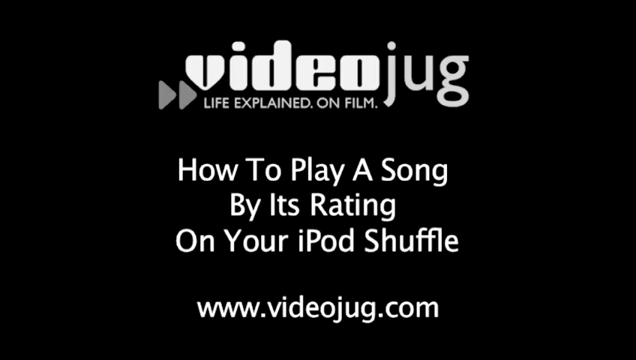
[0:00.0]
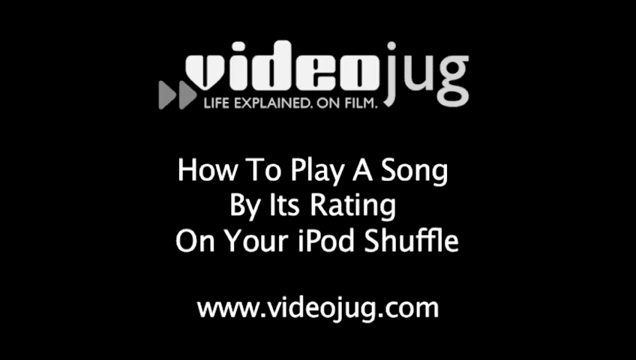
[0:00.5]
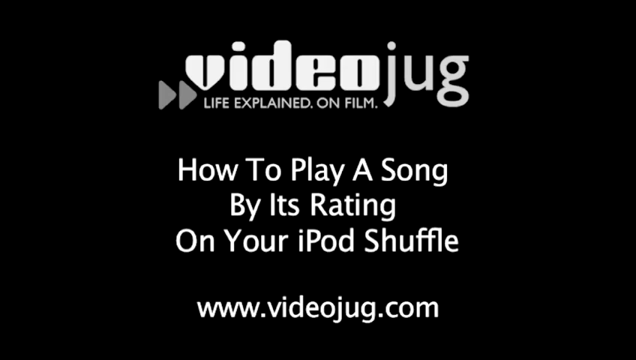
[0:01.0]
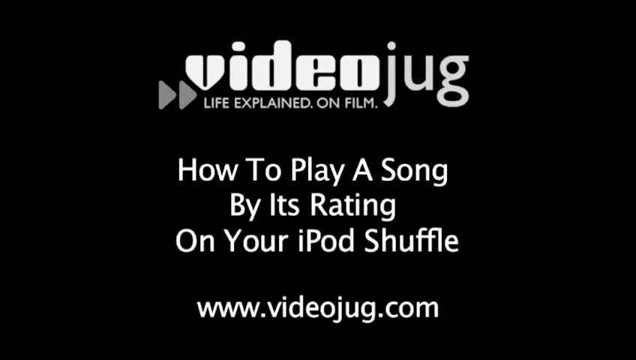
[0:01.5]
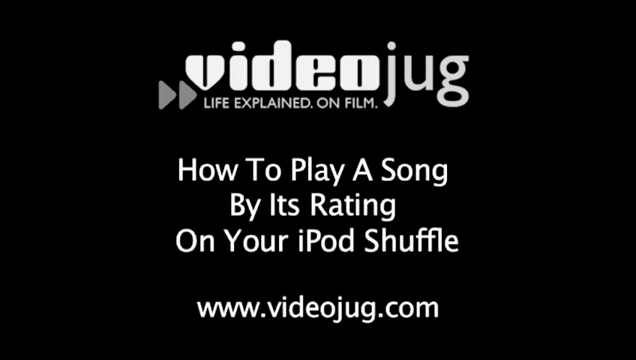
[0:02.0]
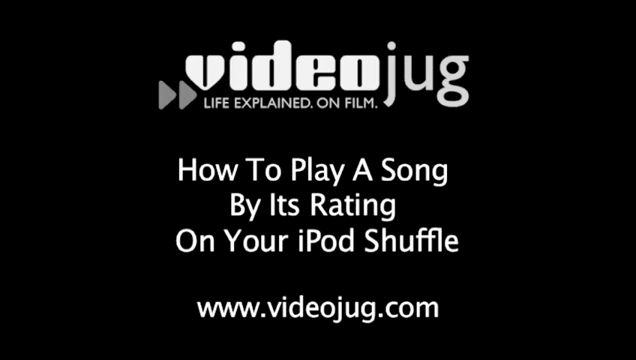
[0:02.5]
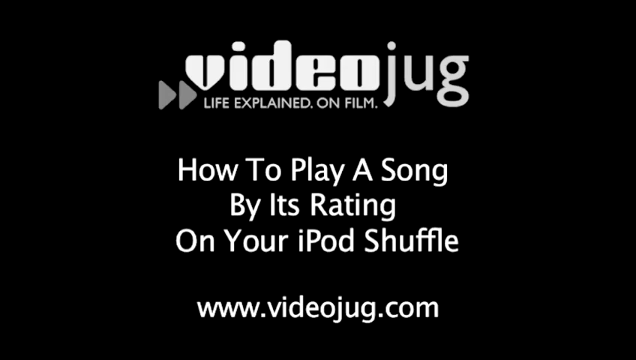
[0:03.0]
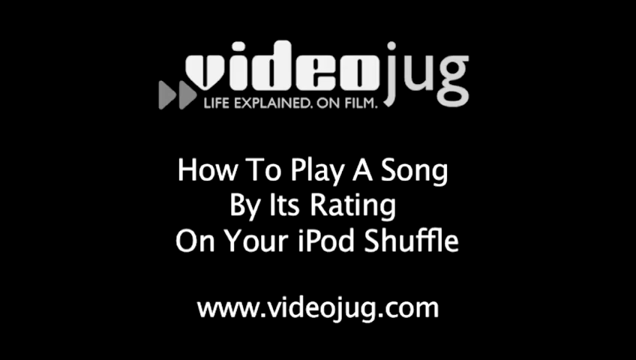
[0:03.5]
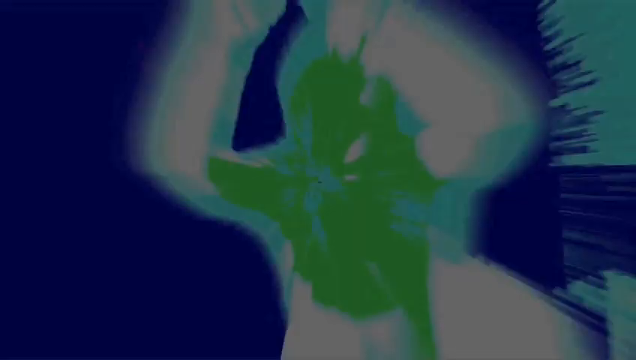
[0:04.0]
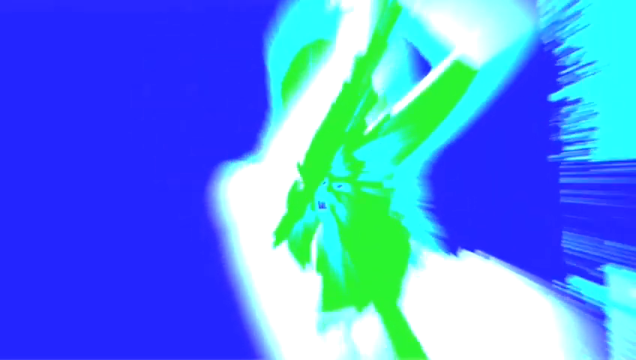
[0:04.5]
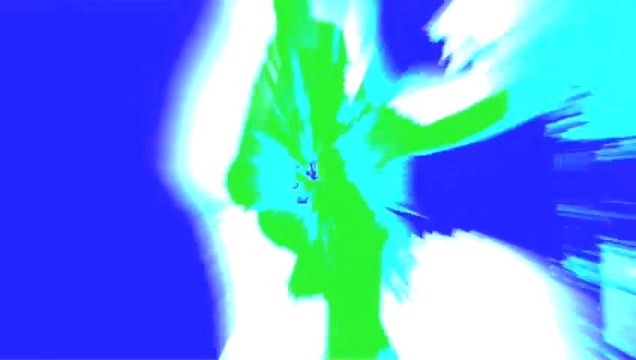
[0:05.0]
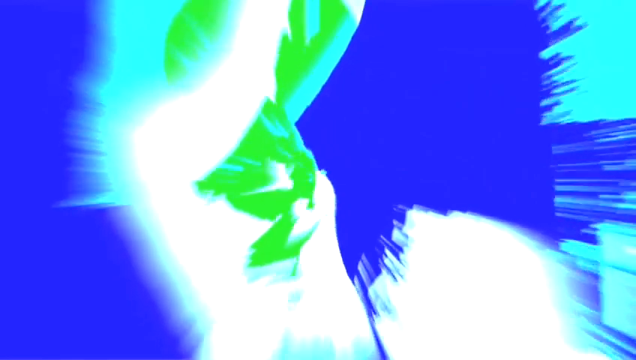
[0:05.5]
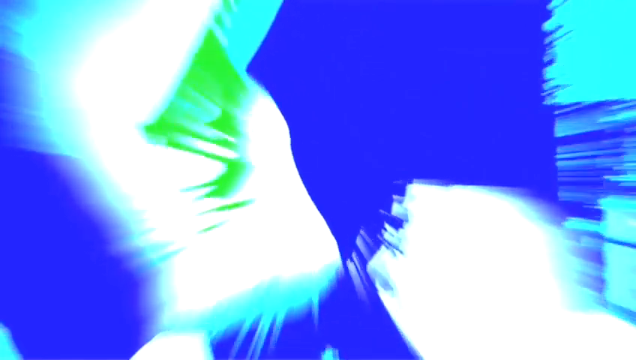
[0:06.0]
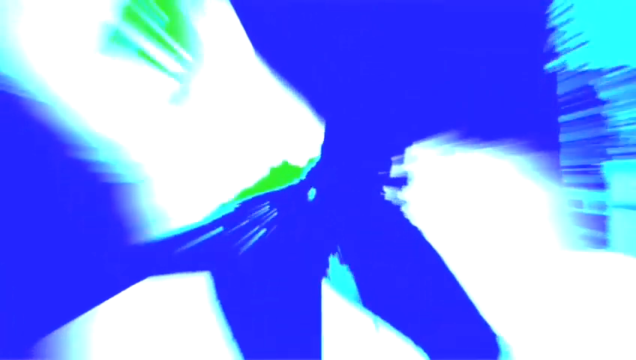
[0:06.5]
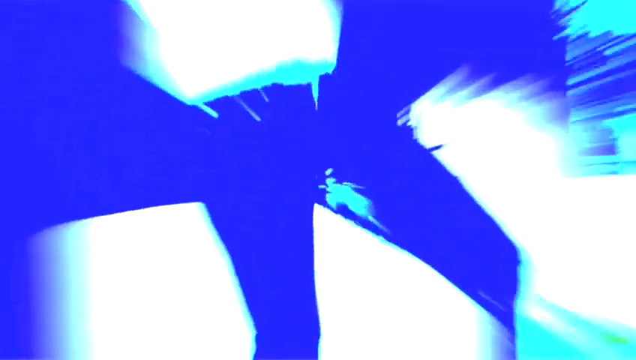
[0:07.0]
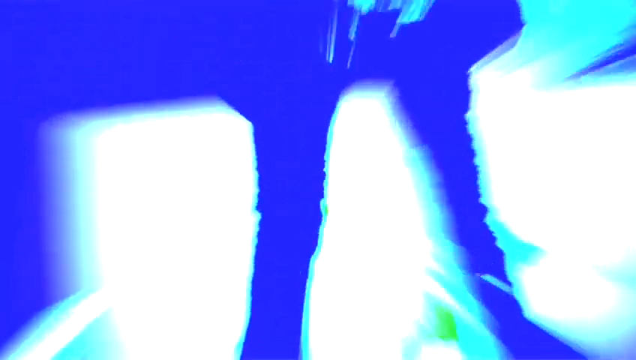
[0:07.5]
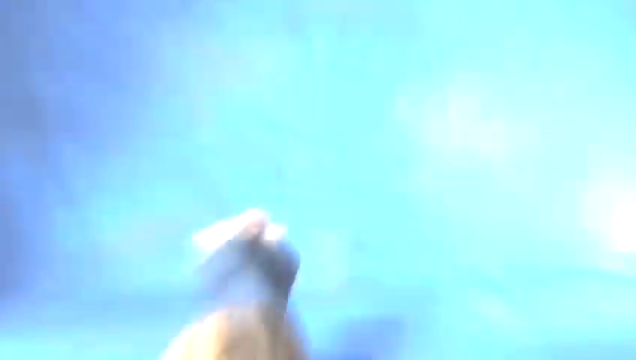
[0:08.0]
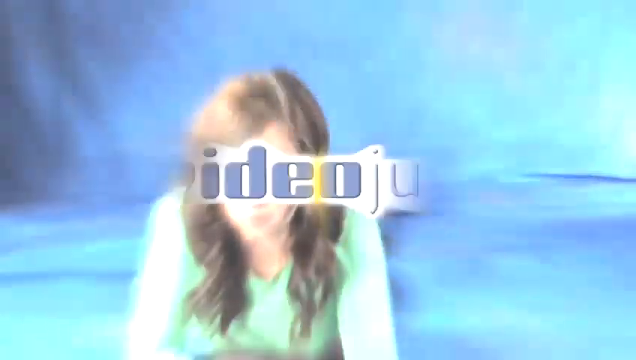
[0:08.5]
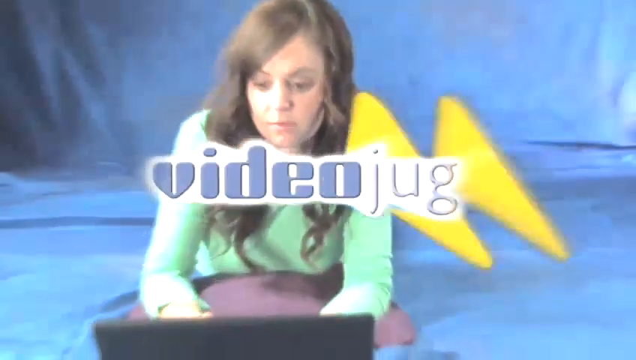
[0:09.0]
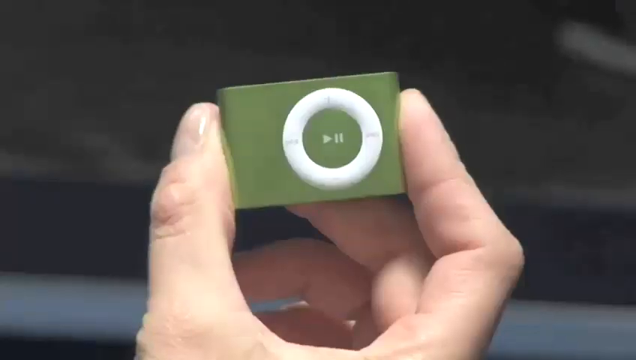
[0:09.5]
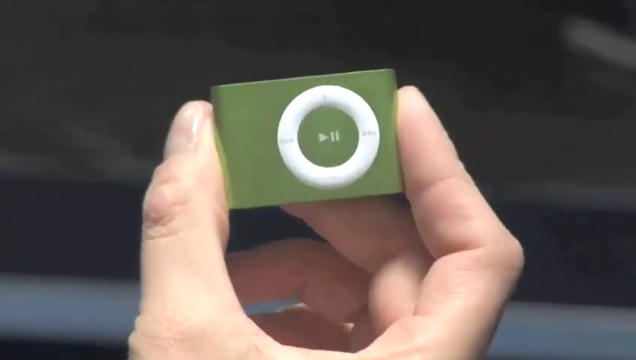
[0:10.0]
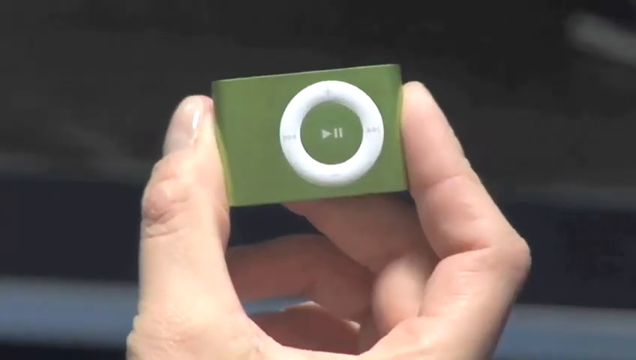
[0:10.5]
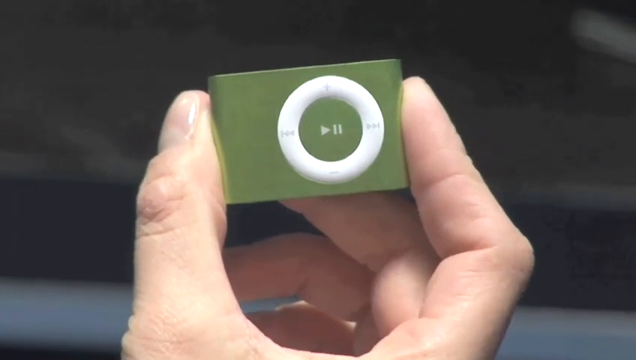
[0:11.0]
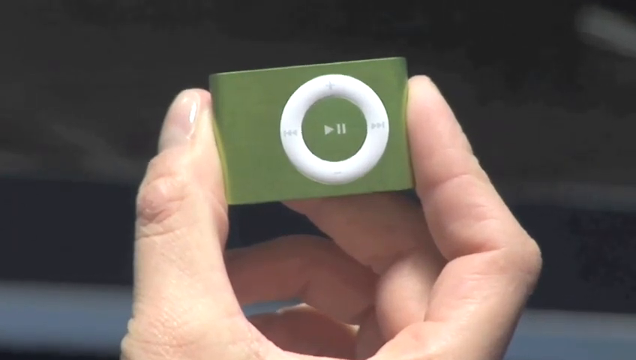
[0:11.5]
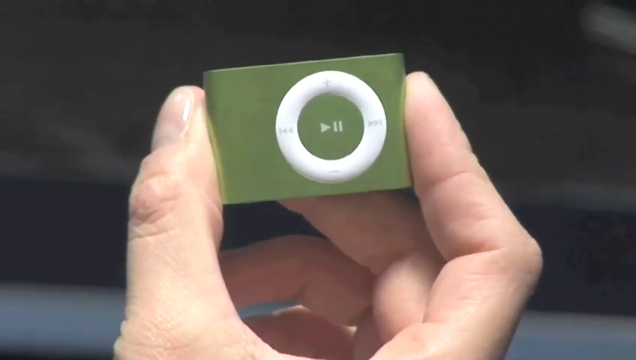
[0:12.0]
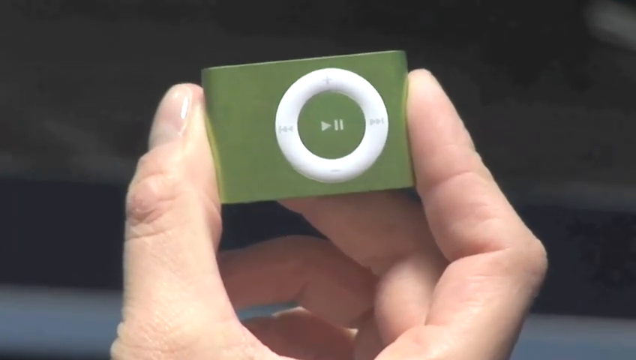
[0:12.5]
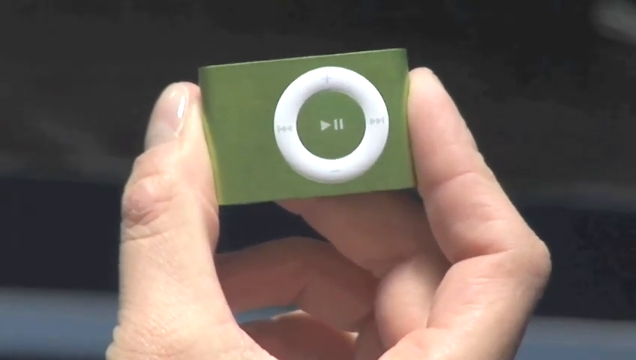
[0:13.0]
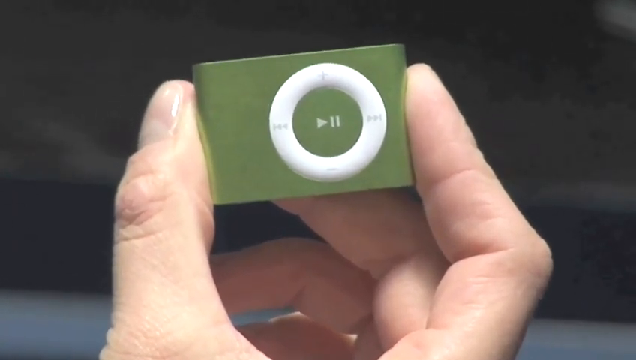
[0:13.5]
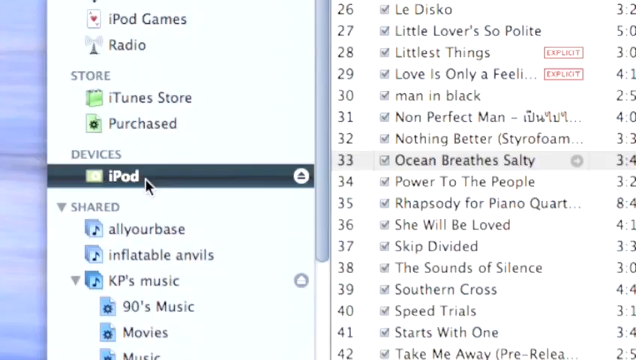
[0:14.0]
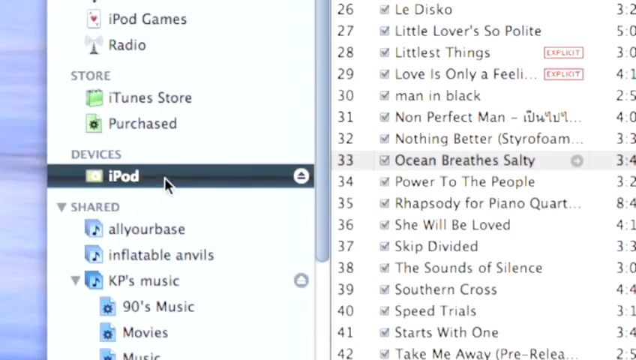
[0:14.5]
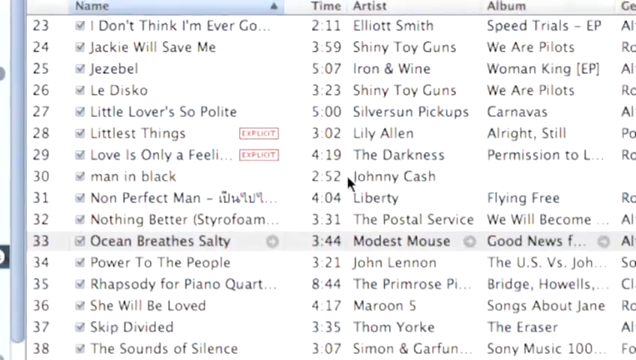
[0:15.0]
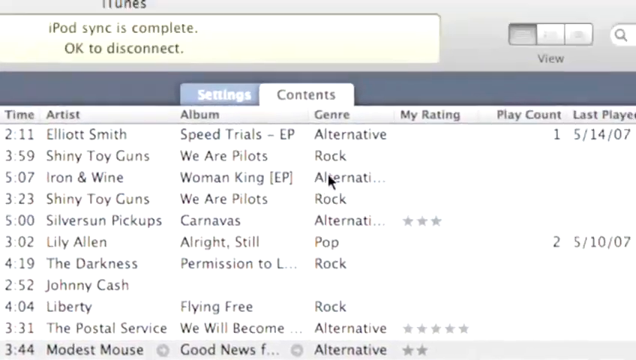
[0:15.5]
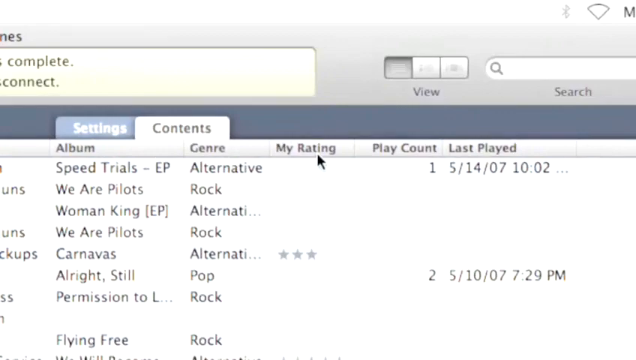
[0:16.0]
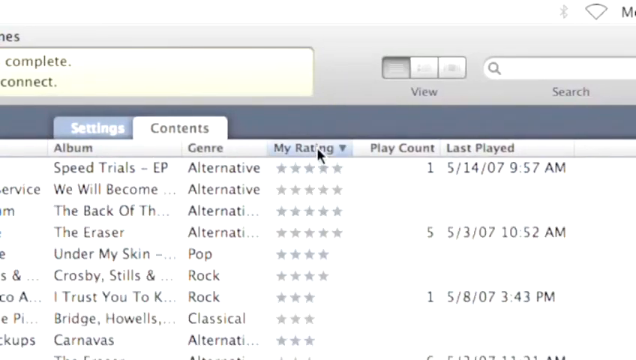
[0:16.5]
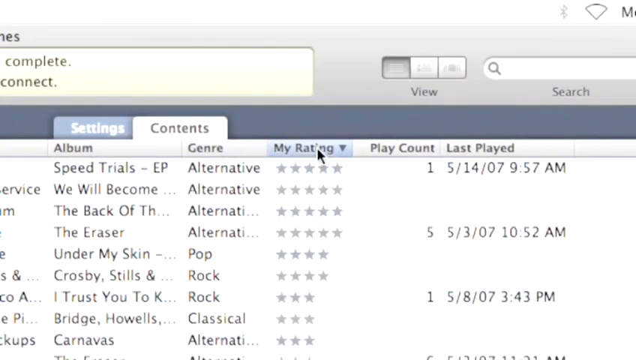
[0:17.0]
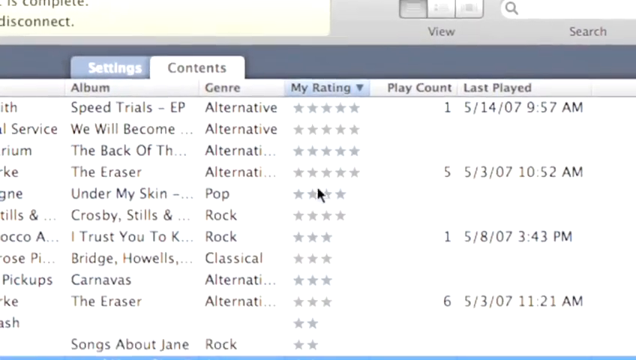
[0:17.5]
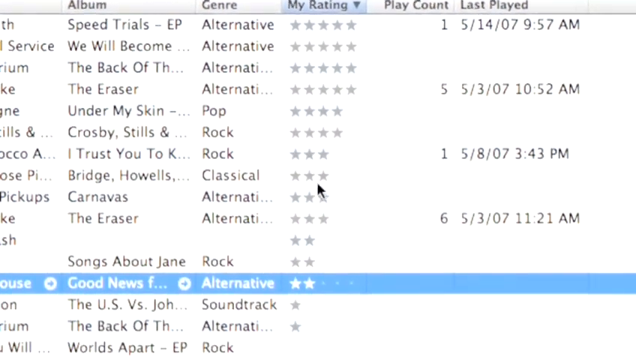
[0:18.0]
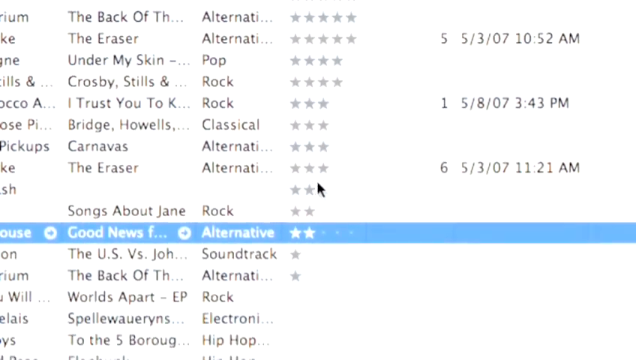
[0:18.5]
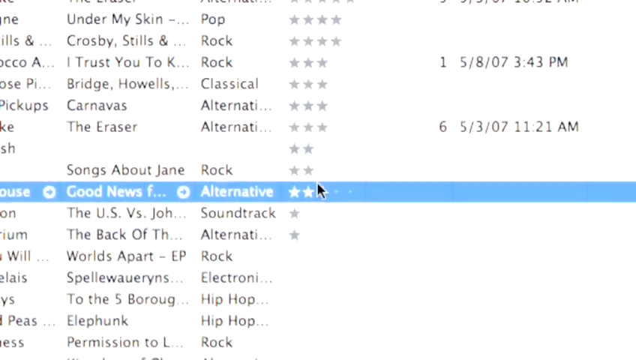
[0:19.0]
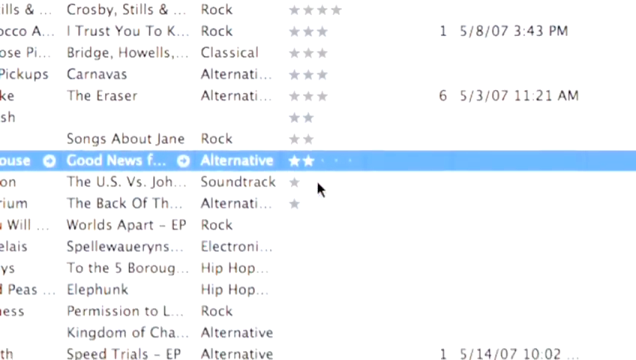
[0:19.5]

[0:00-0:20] A black screen opens with the text "Videojug, life explained on film. How to play a song by its rating on your iPod shuffle, www.videojug.com." The video then pans into footage of a girl dancing against a blue, light blue and white background, in very bright neon colors that are clearly not normal coloring. It then pans into footage, with normal lighting and coloring, of a girl lying down on what looks to be a laptop, with the text "Videojug" appearing on the screen. Next it pans to a different shot of a person holding a green iPod shuffle, slowly zooming in on the iPod shuffle. It then switches to an iTunes account showing someone's iTunes playlist; the cursor goes up to the top of the playlist, clicks on My Rating, and sorts the tracks from highest rating to lowest rating.